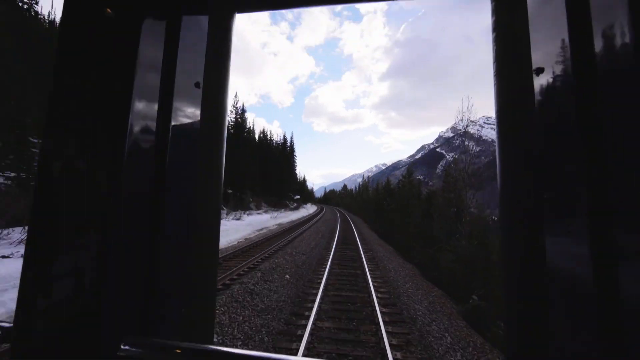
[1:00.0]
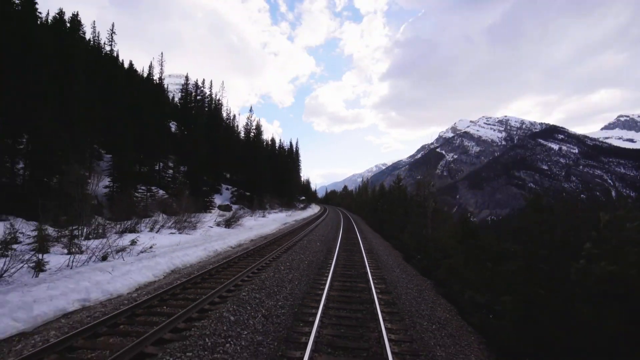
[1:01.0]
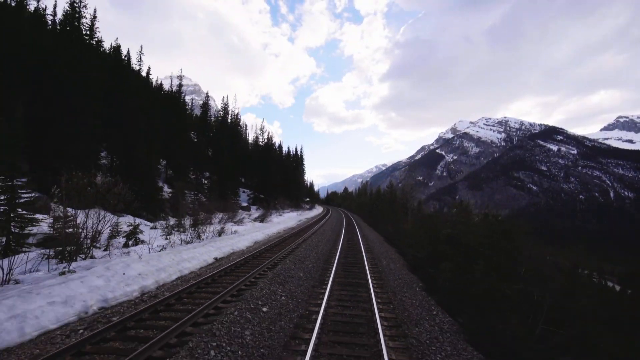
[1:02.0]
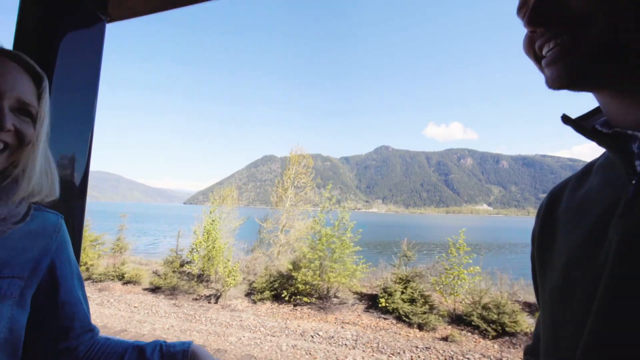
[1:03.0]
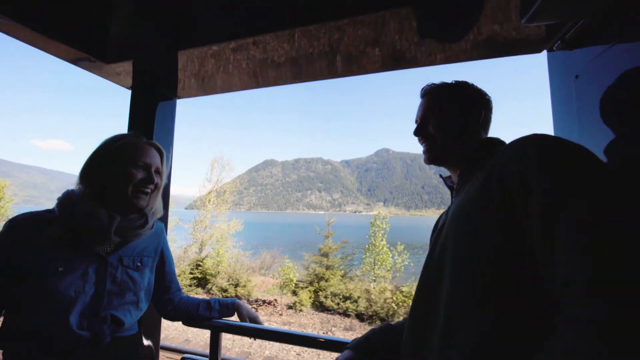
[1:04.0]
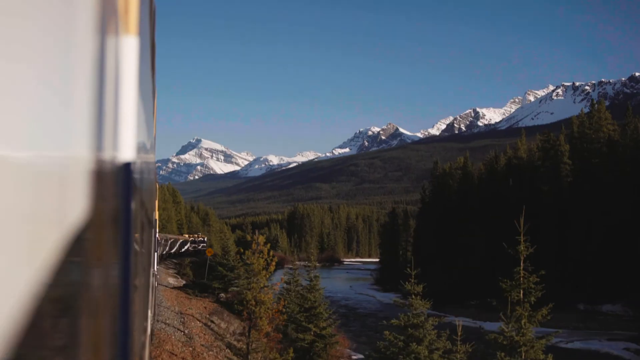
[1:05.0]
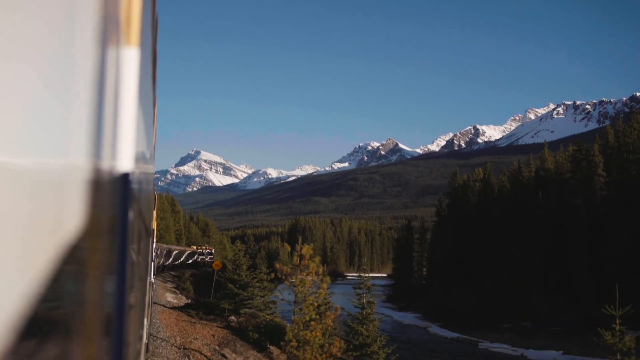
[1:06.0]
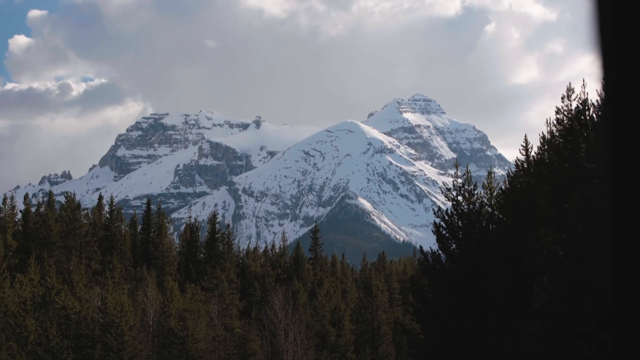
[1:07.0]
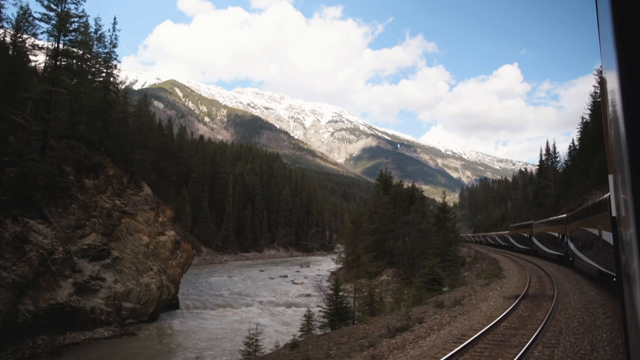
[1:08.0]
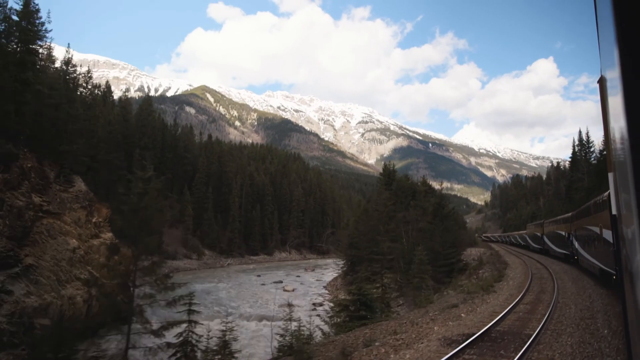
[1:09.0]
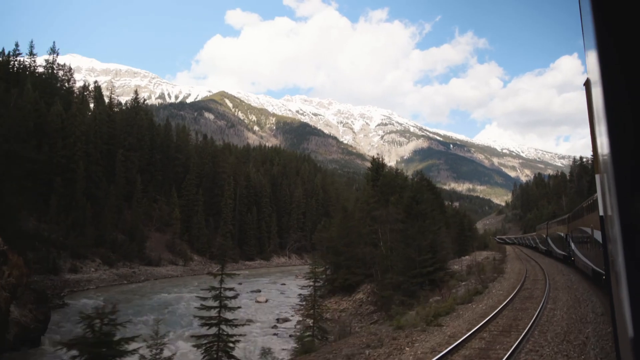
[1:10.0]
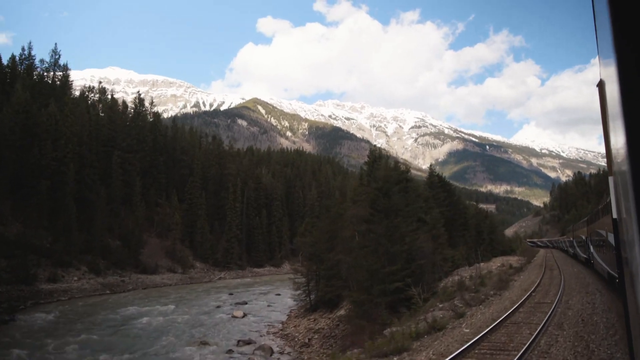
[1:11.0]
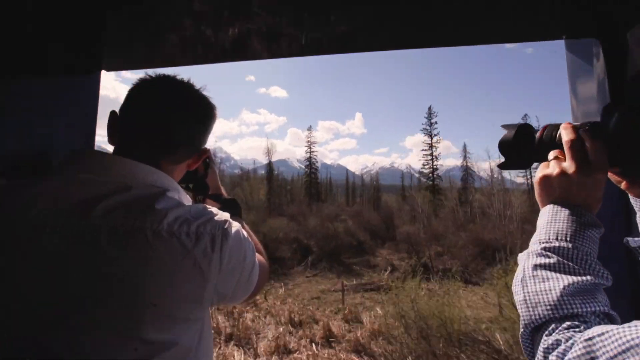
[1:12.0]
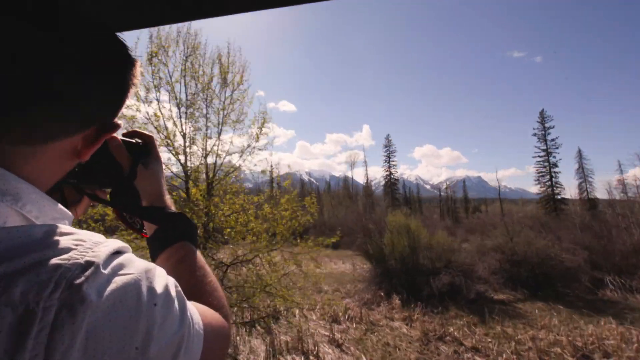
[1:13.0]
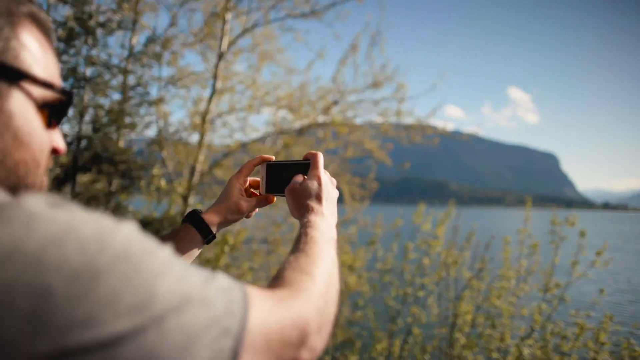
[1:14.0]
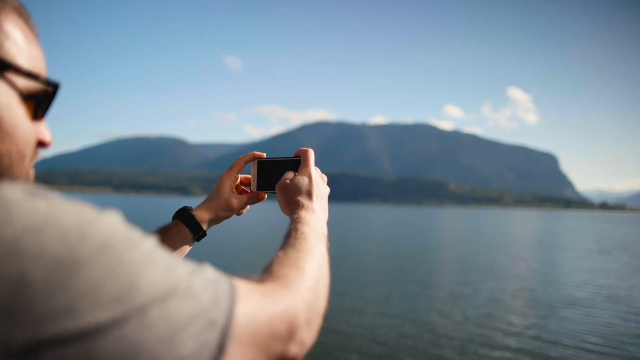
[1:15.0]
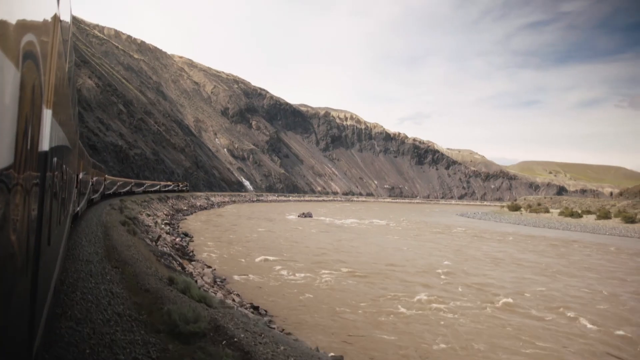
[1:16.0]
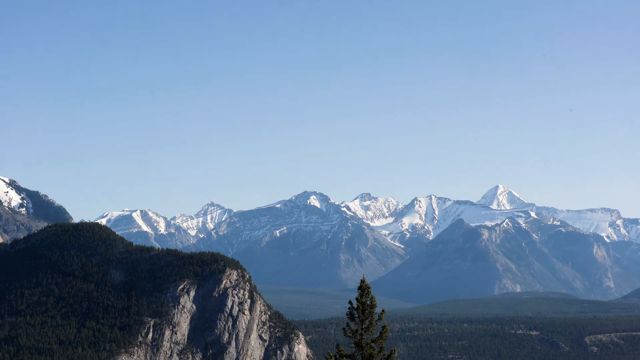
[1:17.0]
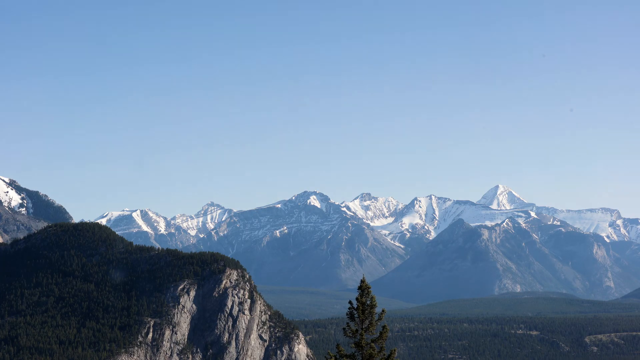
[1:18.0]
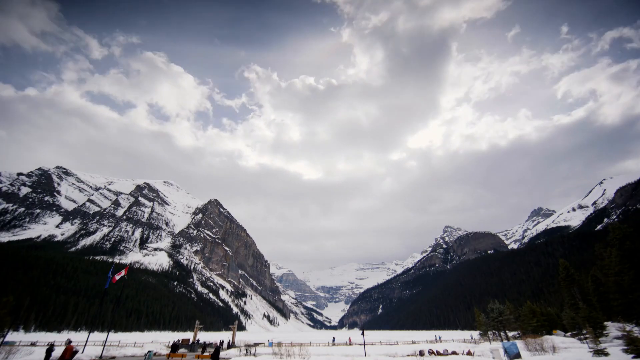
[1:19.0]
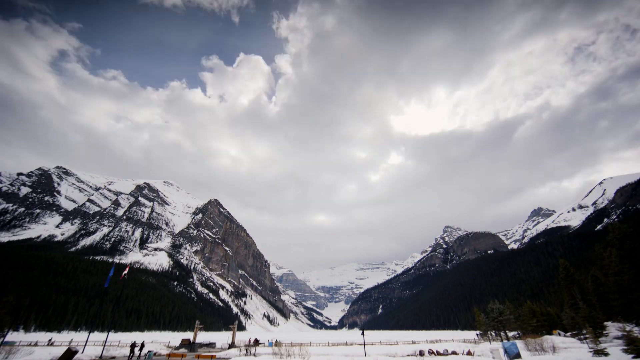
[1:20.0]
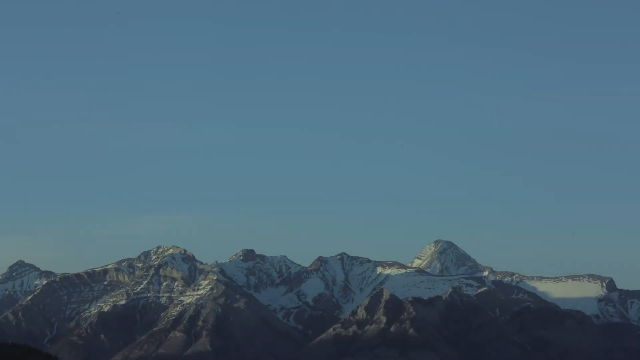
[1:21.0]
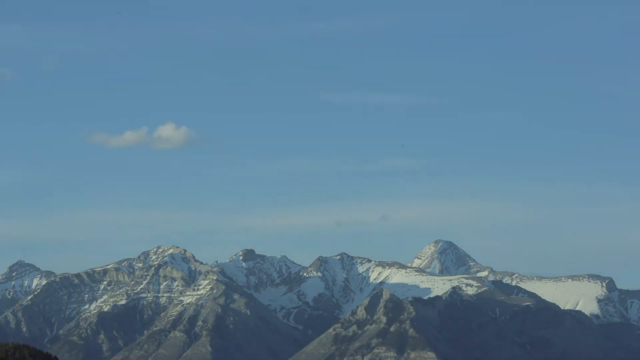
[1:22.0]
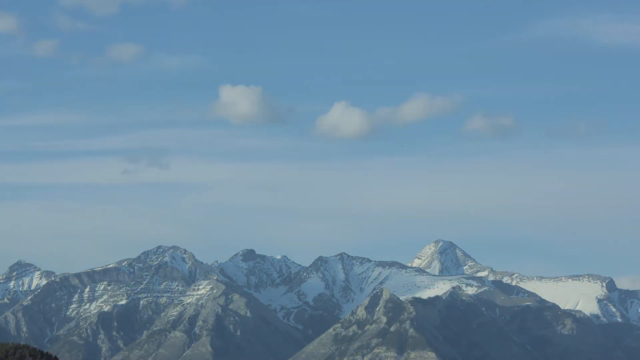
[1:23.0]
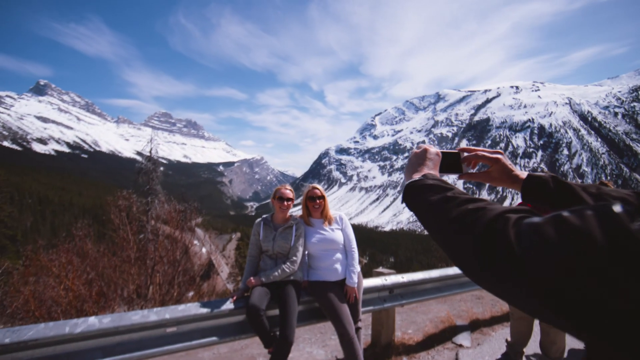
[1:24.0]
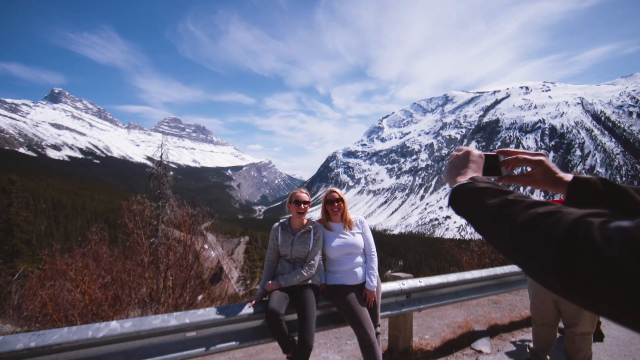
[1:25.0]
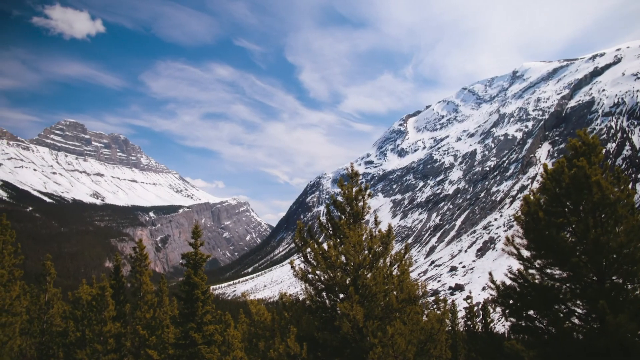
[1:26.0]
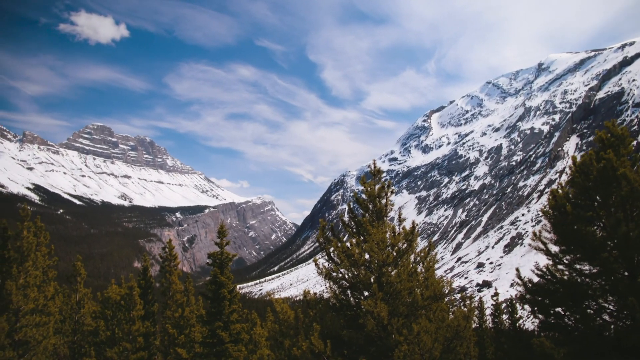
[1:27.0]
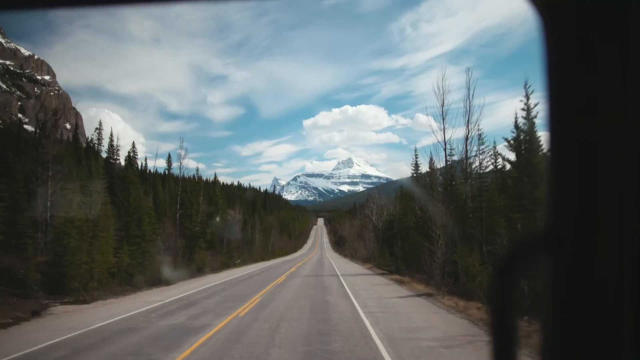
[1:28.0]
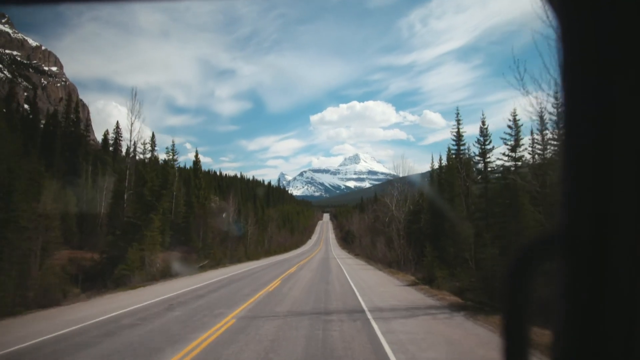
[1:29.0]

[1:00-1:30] Outdoors, the footage is filmed from the back of a train, apparently from the last train car, with the railroad receding away in front of the camera. There is a forest on the left and mountains on the right. A camera in a different location then shows the inside of a rail car, apparently a passenger car with a lot of glass, where two people are smiling and somewhat laughing. The train rounds a bend, and the view from outside the window shows a very mountainous area with snow on the peaks and thick evergreen trees. Another shot of the train follows, then another shot of the landscape, closer to the mountain, showing how tall it is and how icy its tops are. In another view, the train is still moving and goes around a bend.